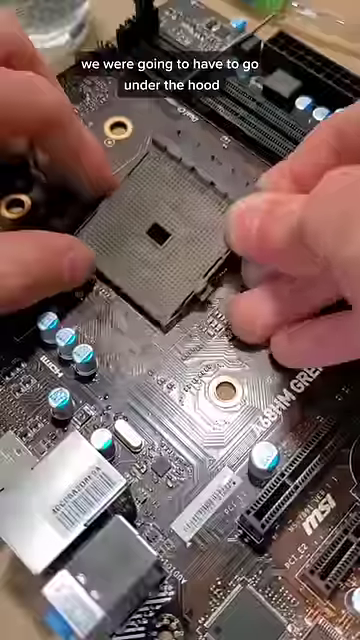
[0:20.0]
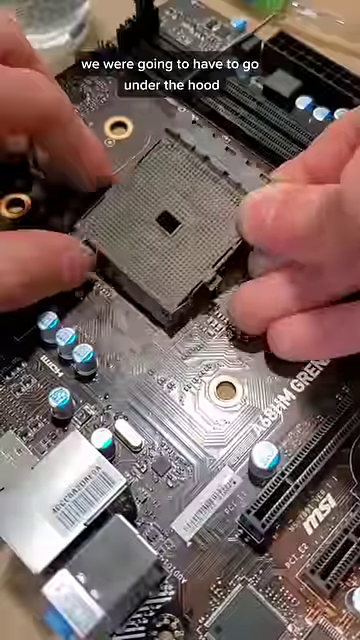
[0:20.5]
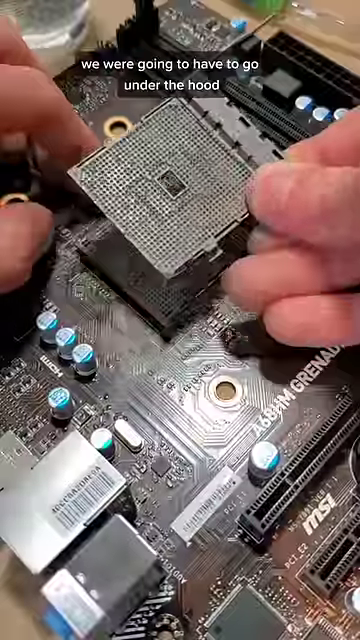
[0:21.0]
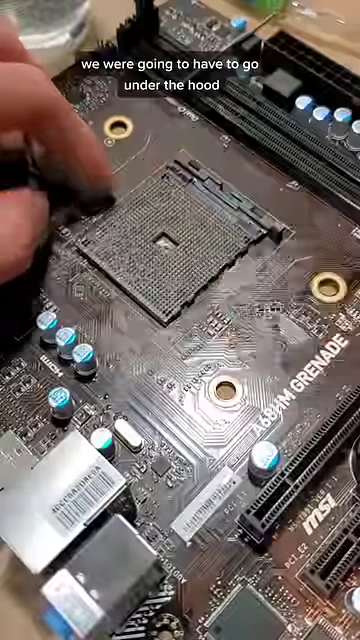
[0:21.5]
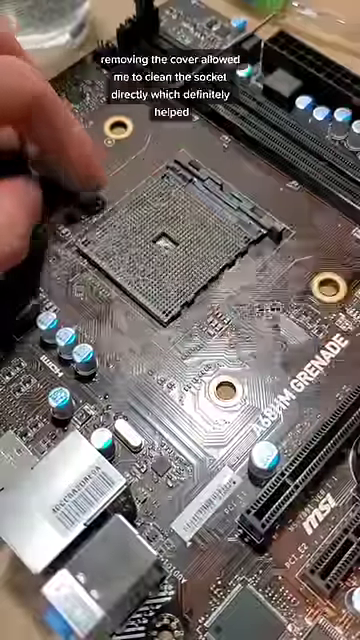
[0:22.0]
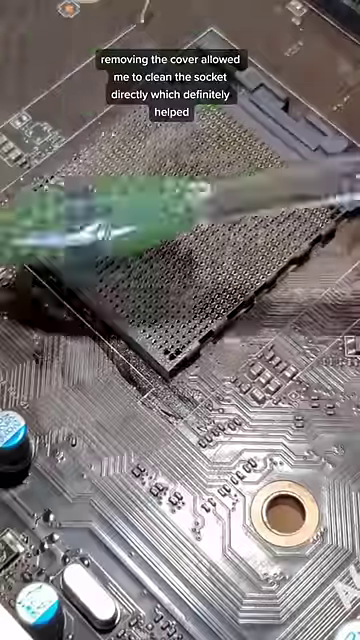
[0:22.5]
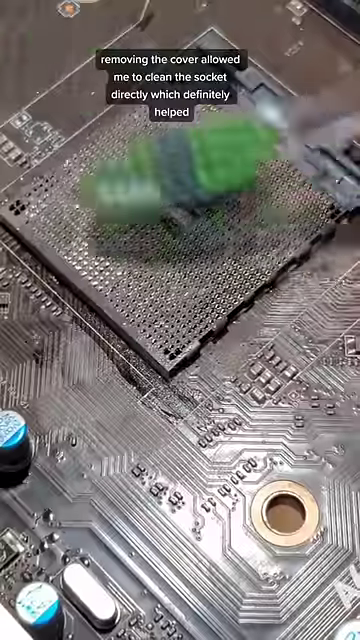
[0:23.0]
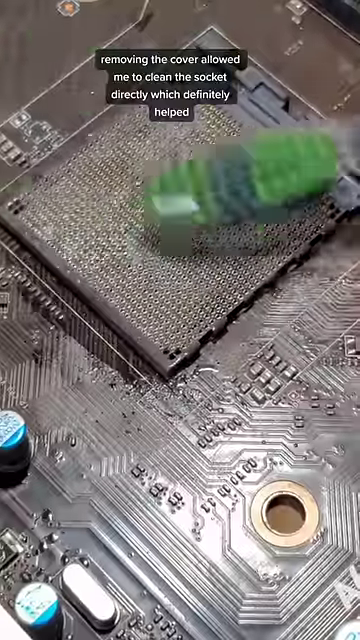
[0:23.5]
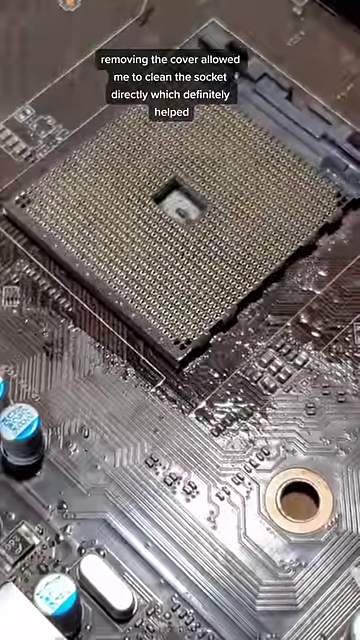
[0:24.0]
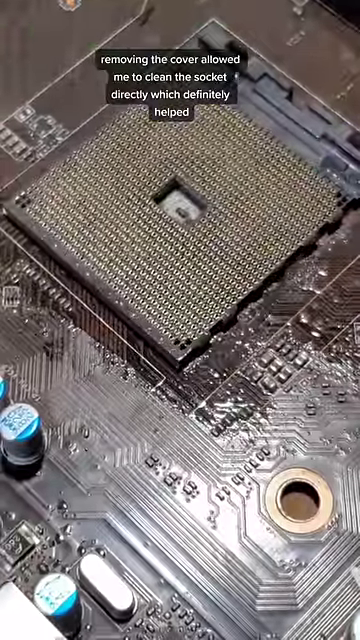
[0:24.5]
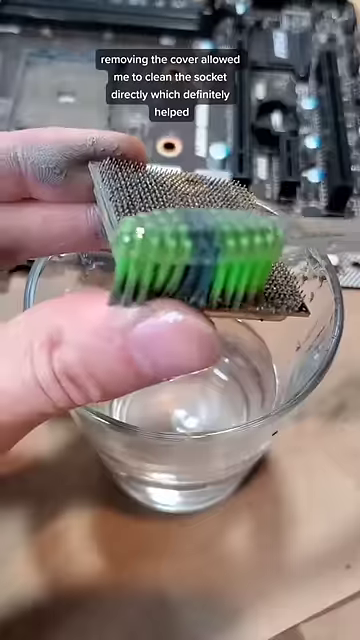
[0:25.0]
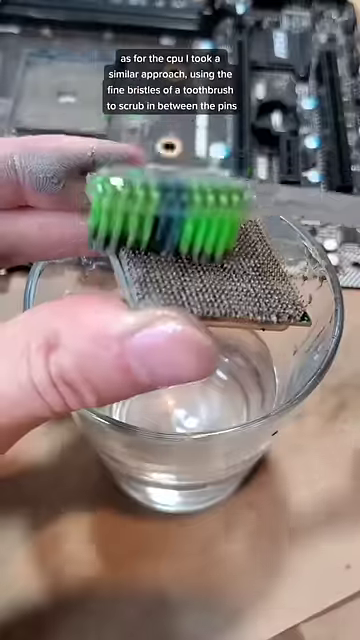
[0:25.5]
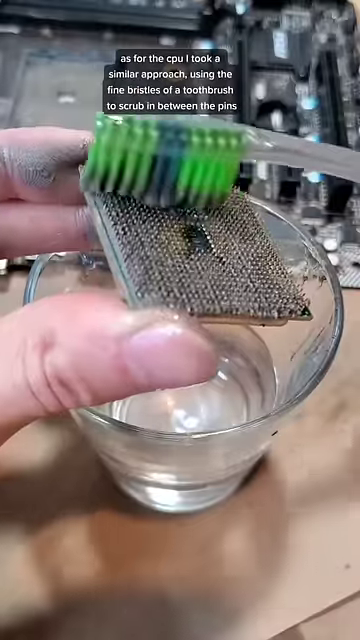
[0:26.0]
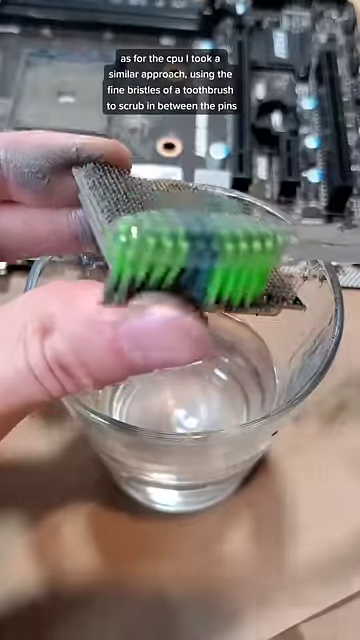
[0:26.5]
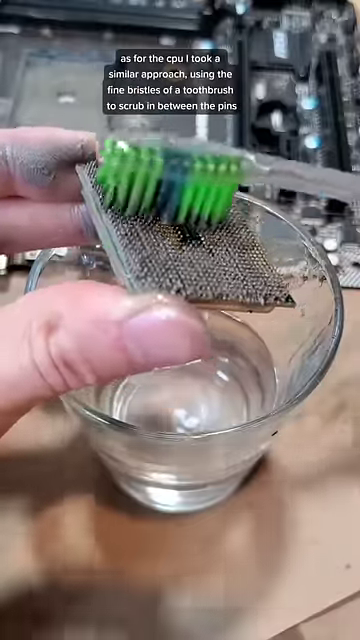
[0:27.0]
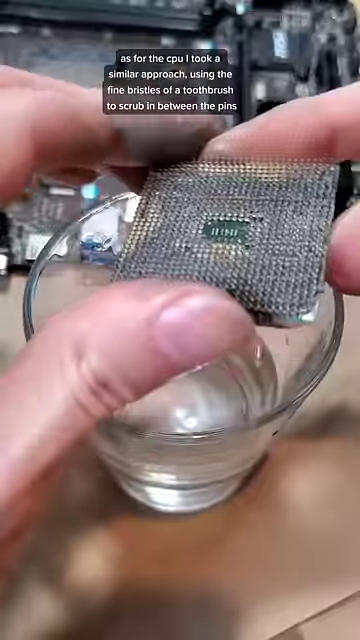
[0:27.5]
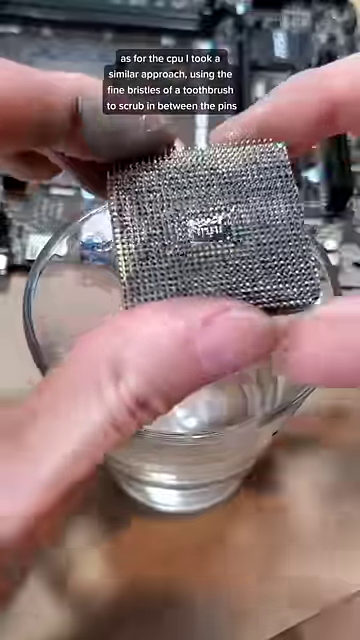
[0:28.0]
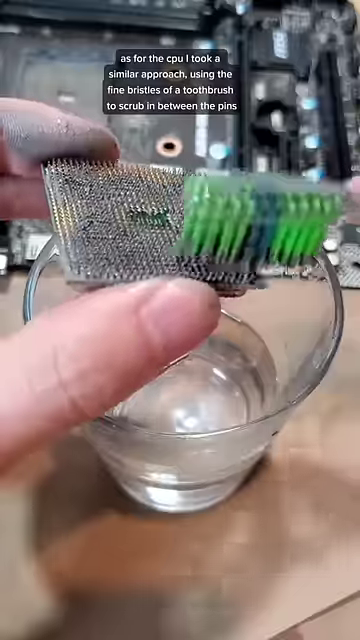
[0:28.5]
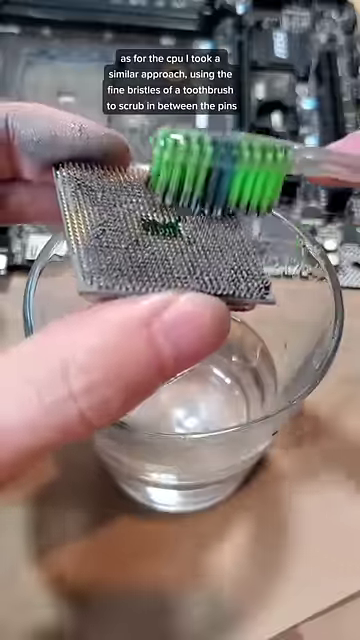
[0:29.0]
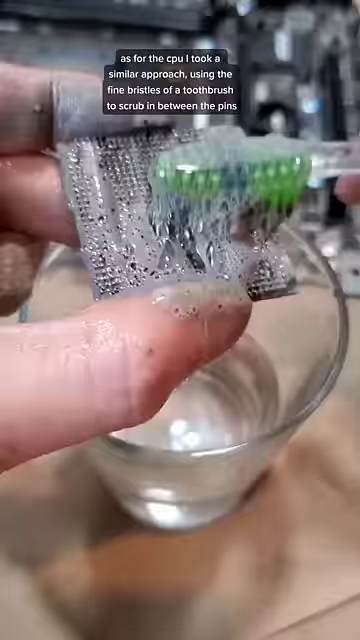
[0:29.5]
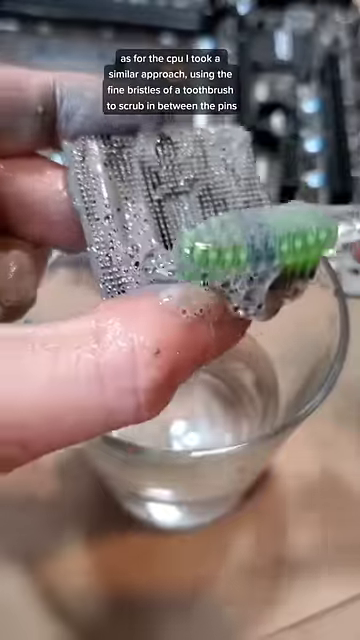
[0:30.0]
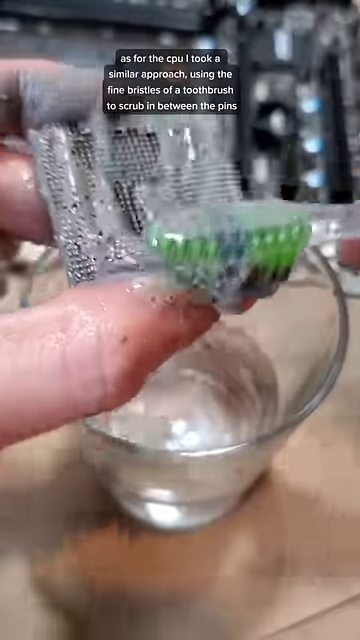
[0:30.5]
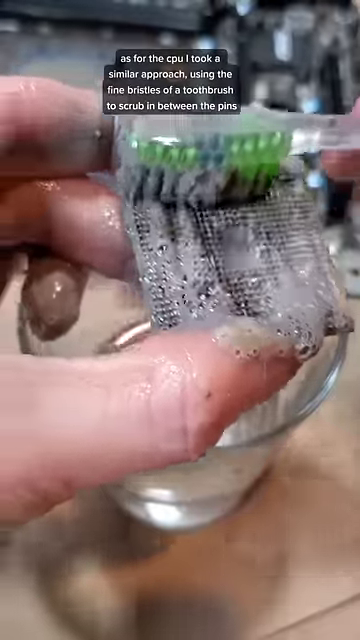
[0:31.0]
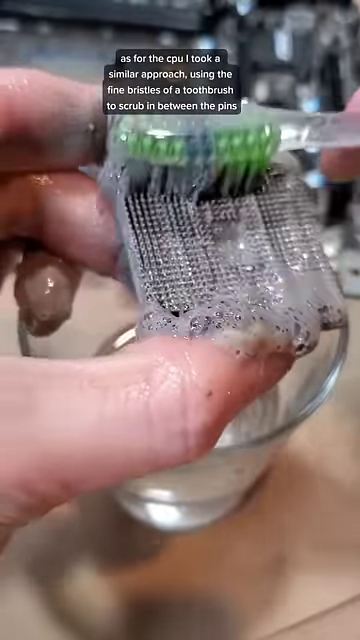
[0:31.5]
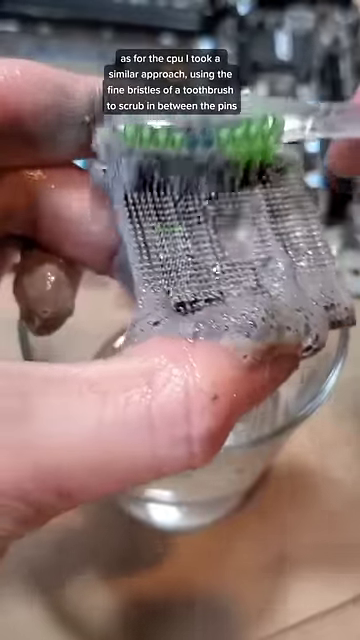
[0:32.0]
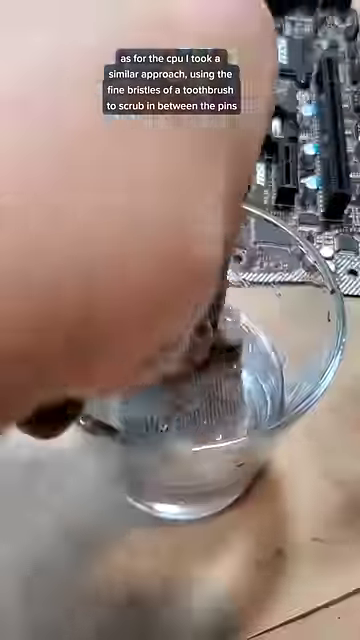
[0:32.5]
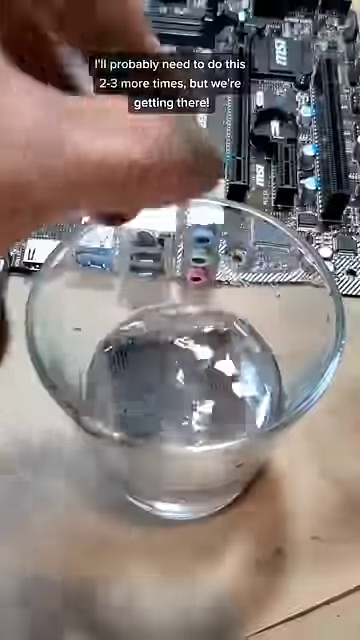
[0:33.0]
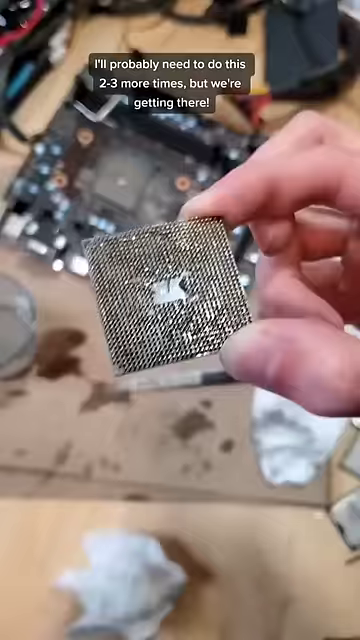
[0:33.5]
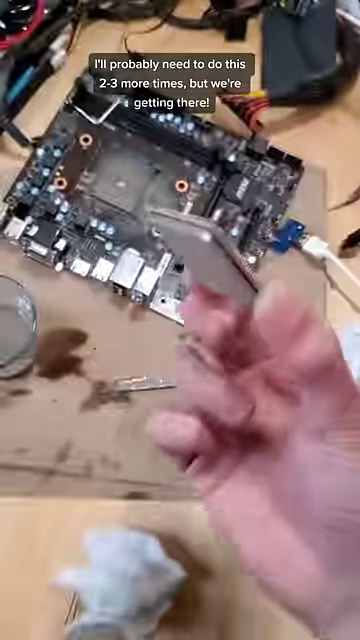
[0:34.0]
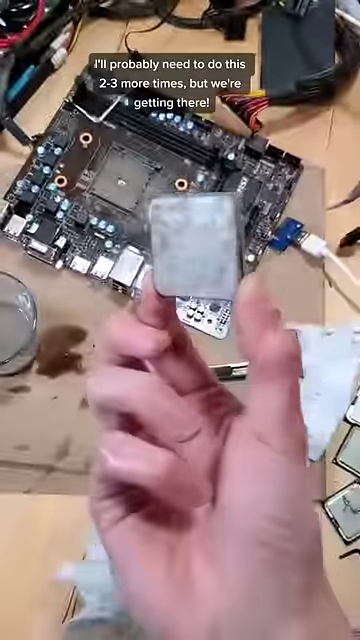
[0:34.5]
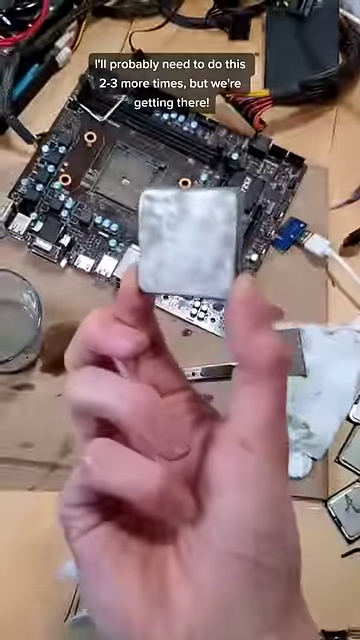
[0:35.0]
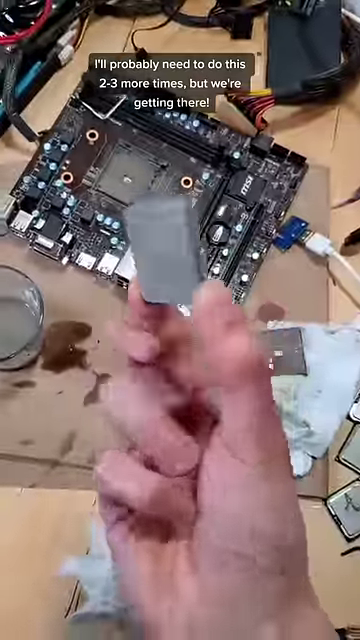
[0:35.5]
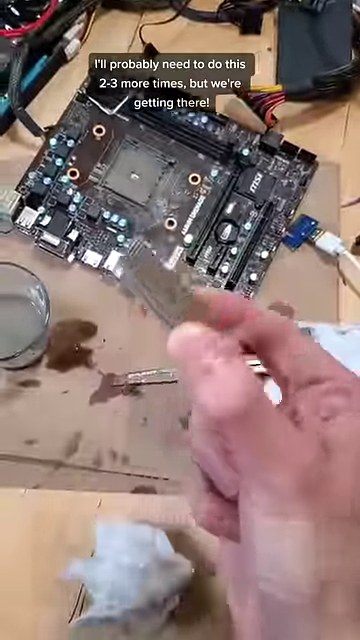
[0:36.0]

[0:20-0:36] The person removes the socket from the CPU off the motherboard and holds it above a glass of water, using a toothbrush to get between the grooves of the socket and clear the thermal paste from between the pins on the CPU. This produces a slimy, goopy residue that is removed, and then he drops it into the glass of water to wash it off. Text over the top describes what is being done in each step. Everything is done on what looks like a desktop with a light brown wooden color, and only the fingers and hands of the person using the toothbrush are visible.